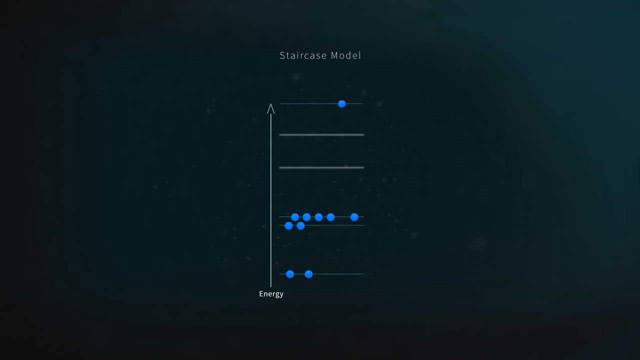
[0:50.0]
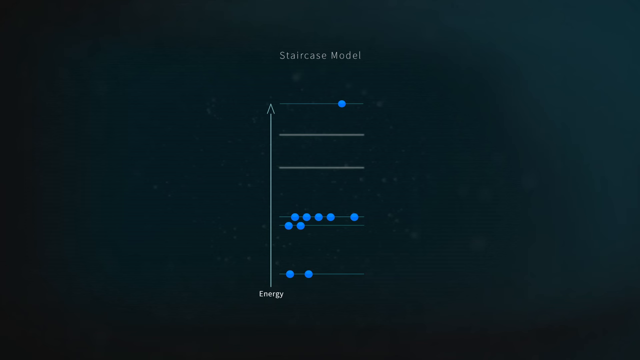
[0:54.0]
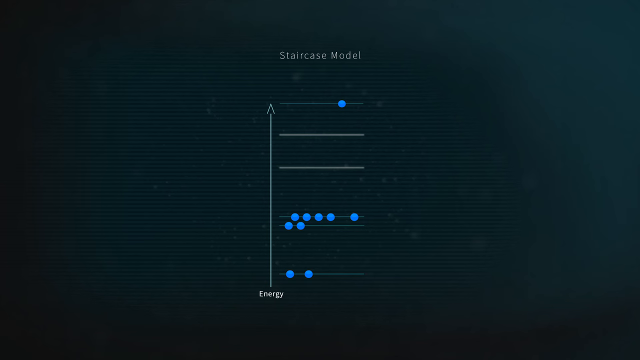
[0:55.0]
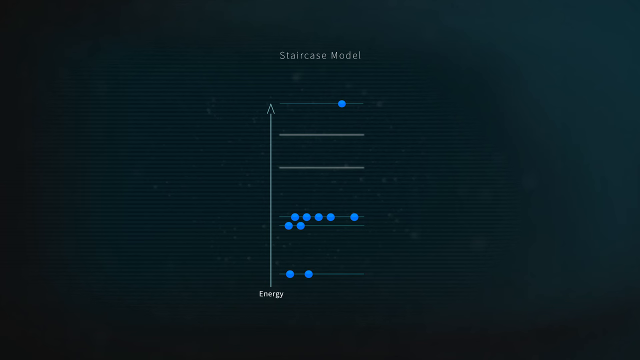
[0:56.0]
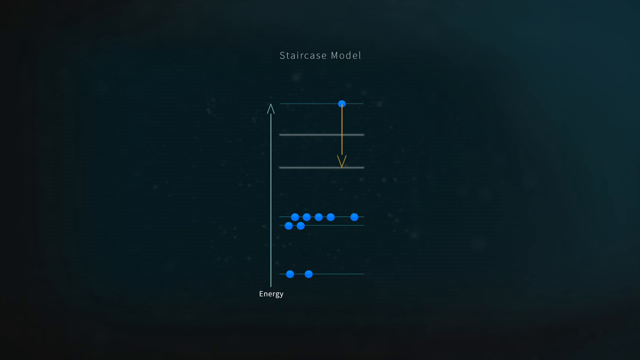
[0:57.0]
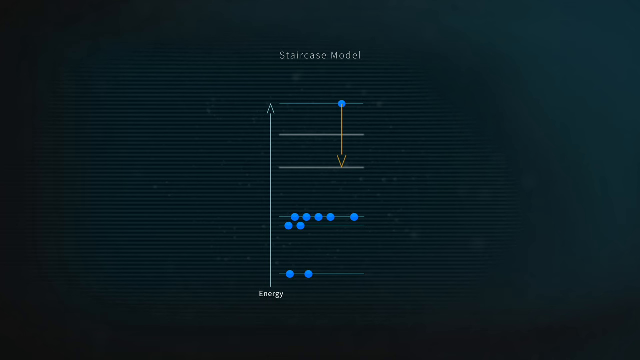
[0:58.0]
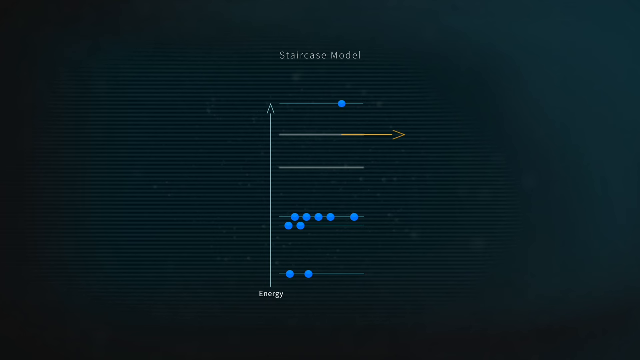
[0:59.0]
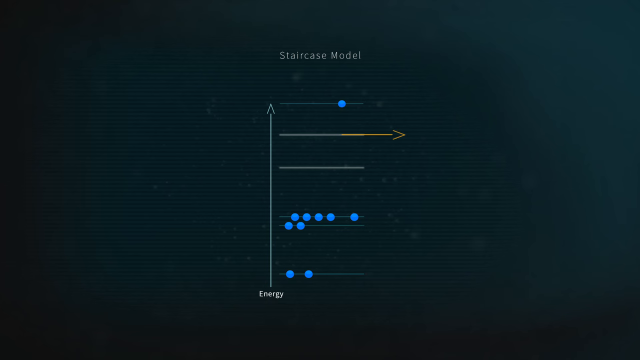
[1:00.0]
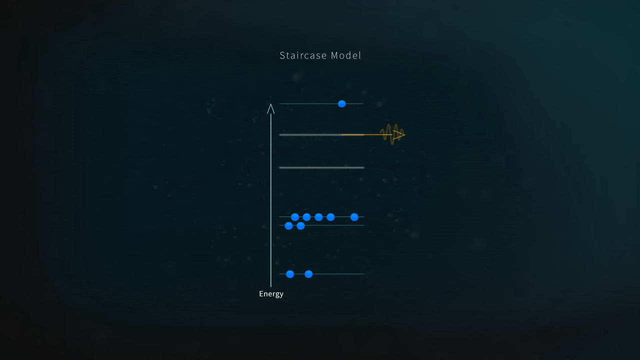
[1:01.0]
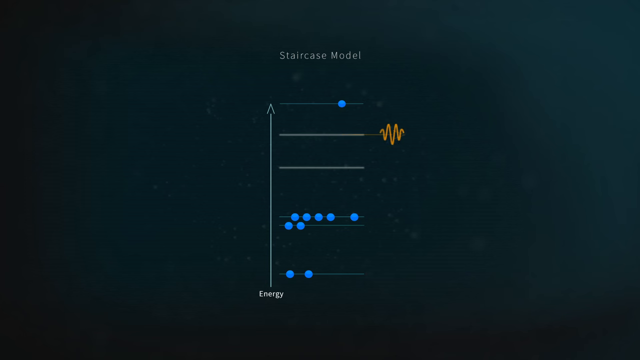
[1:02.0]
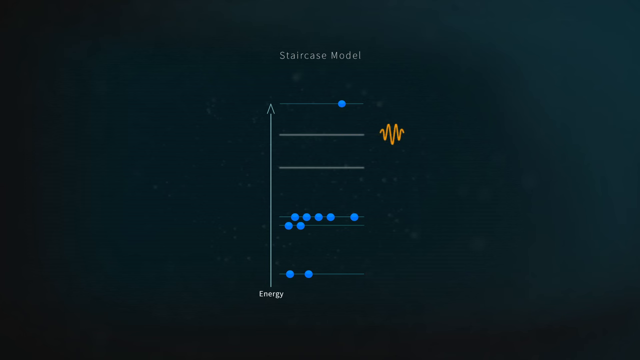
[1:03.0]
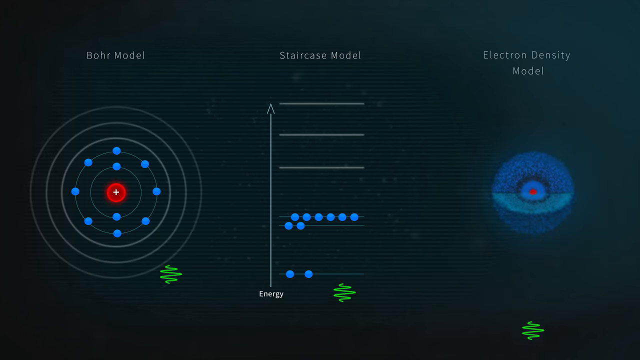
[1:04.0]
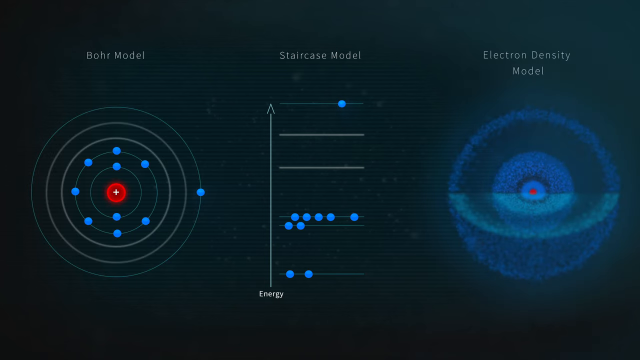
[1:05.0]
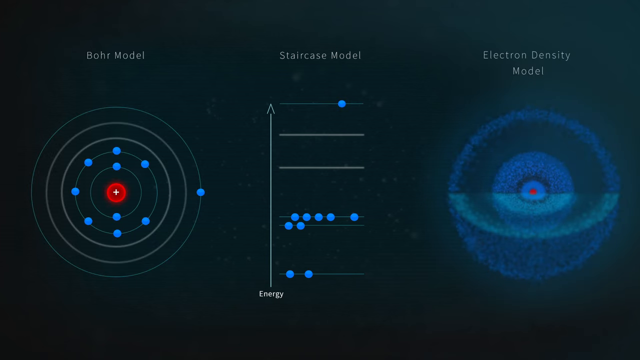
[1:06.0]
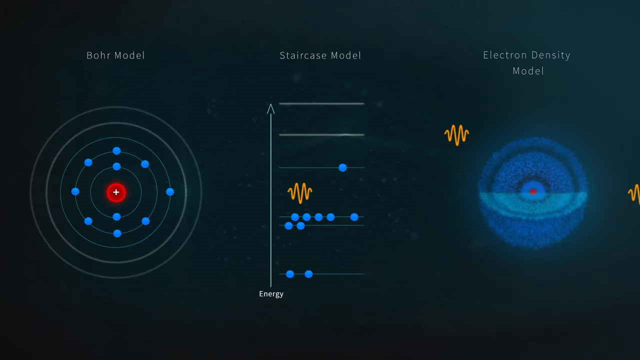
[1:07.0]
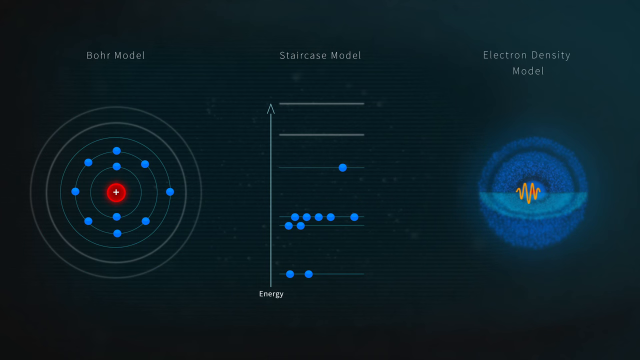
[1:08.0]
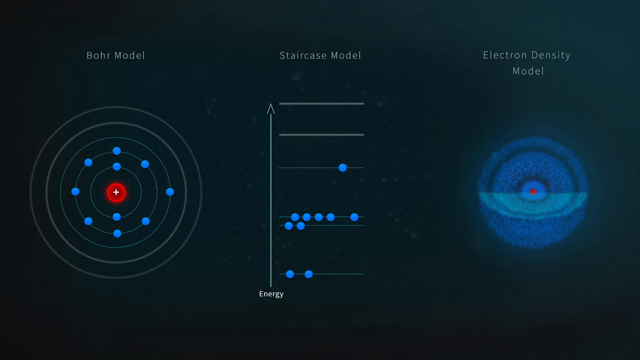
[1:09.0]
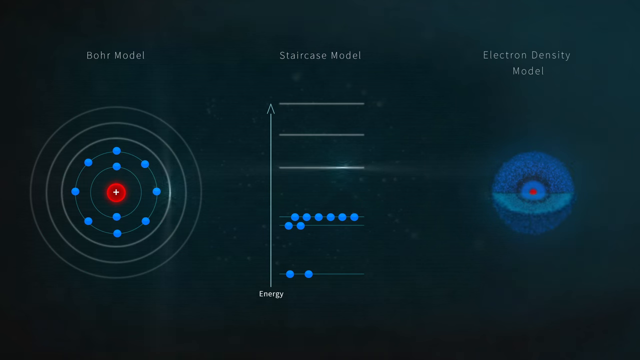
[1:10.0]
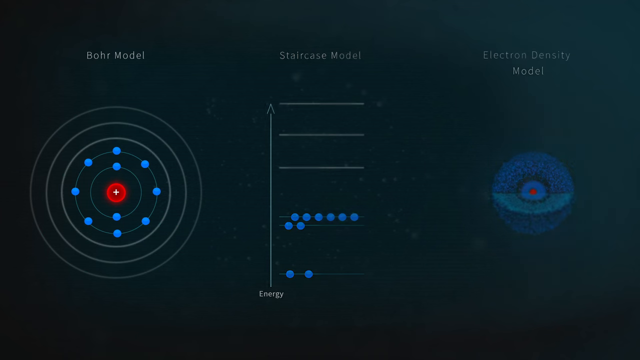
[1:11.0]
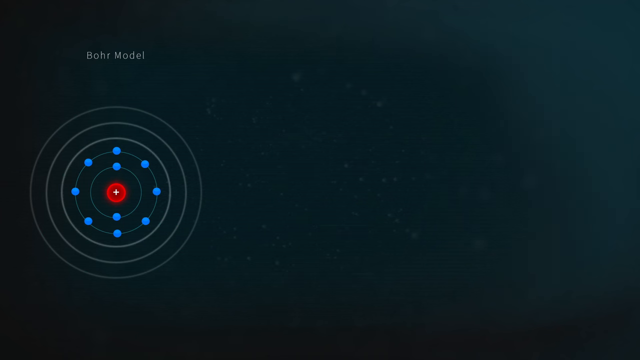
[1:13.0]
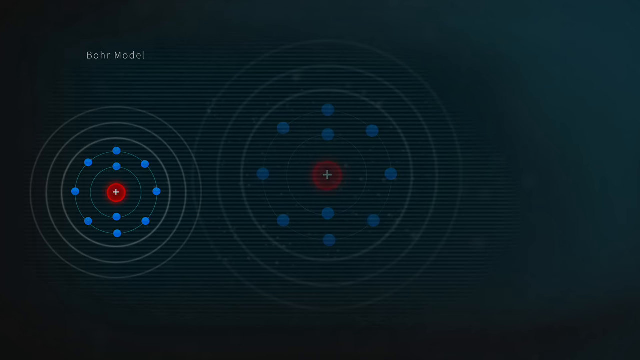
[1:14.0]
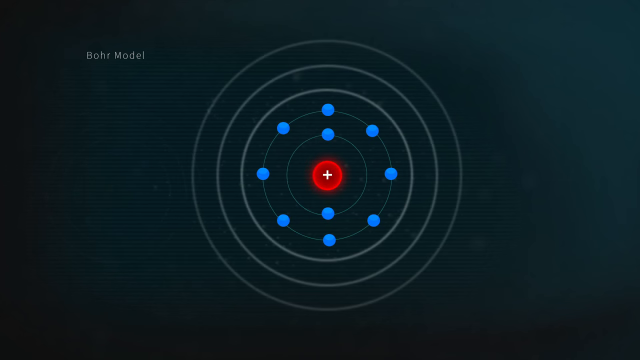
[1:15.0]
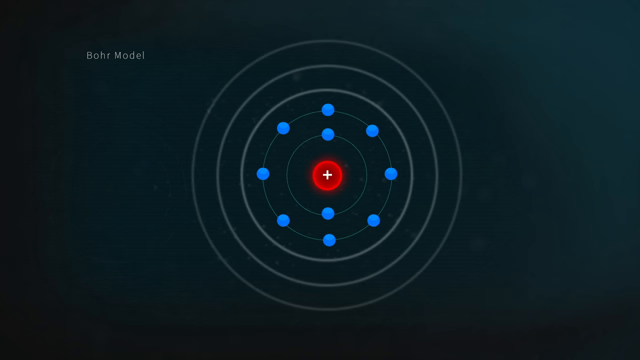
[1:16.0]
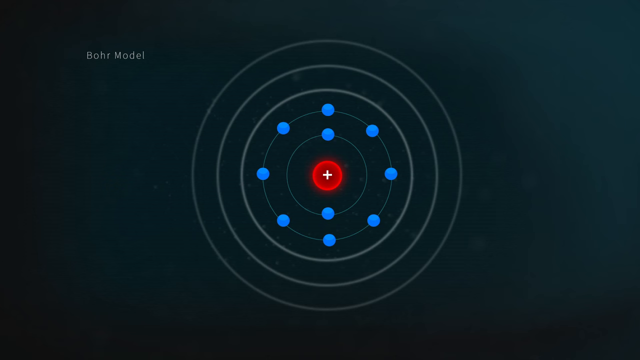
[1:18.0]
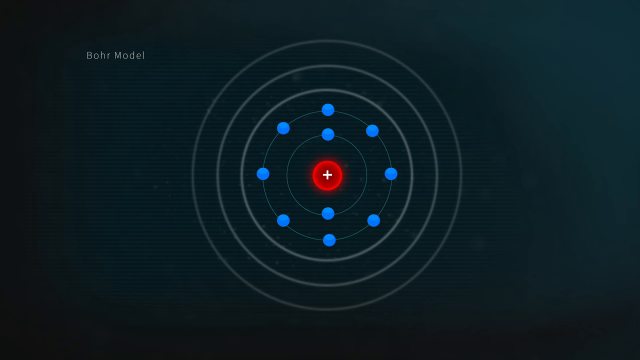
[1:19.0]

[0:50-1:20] A model of the electron energy levels of an atom is shown. The lowest energy level is a line at the bottom with two dots on it, a line further up has seven dots, and there are three lines above that, the top one with a single dot. All the dots are blue. After a few seconds, an arrow moves, leaving a line from the dot on the top line down to the empty line two lines below it. The arrow then rotates counterclockwise to line up with the second line down, pointing toward the left side of the screen, and squishes into a squiggly line. Two more diagrams fade in. On the left is a standard model of an atom with a red nucleus and five circles around it, two of which are full of blue dots. On the right is something that looks like a spherical view with a section cut out, with layers going in toward a red dot in the center. Three green squiggly lines move up from the bottom of the screen and off, then three orange lines move from the left-hand side of the screen and off. The right two diagrams then fade out, leaving the model of the atom, which disappears and reappears slightly larger in the center of the screen.